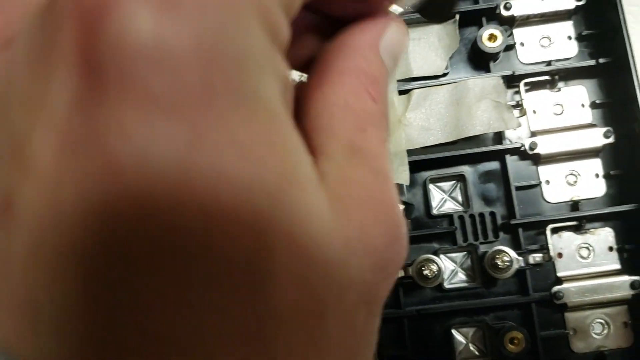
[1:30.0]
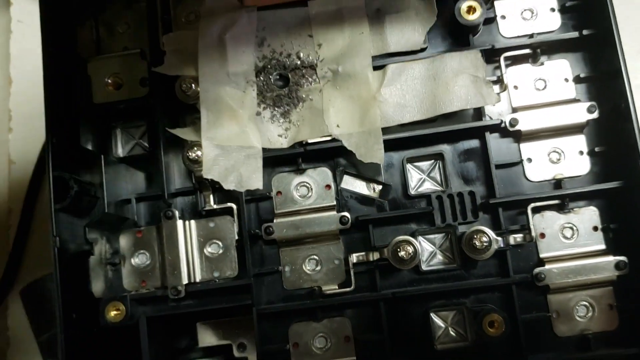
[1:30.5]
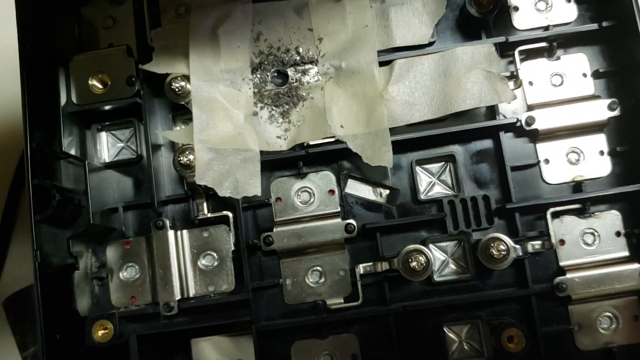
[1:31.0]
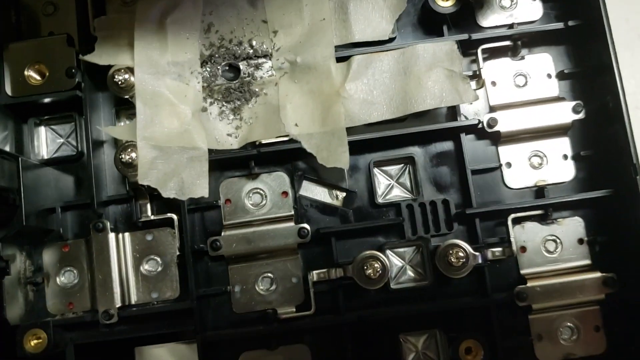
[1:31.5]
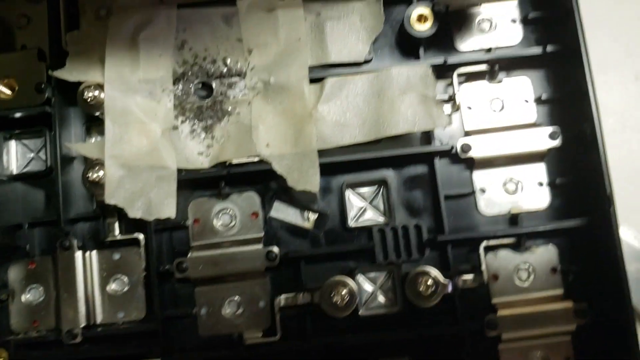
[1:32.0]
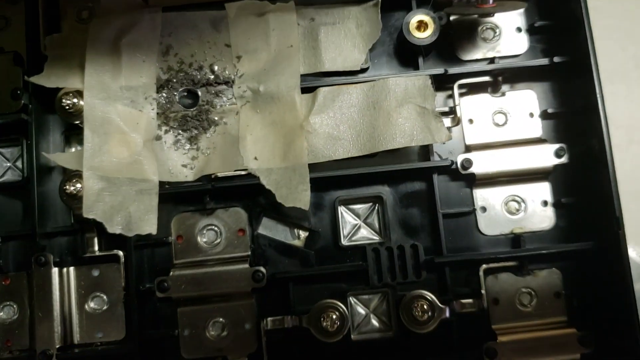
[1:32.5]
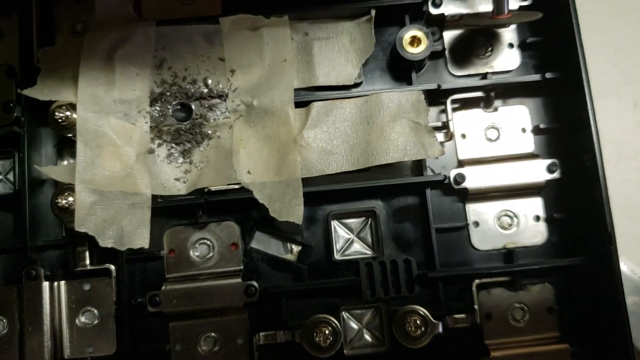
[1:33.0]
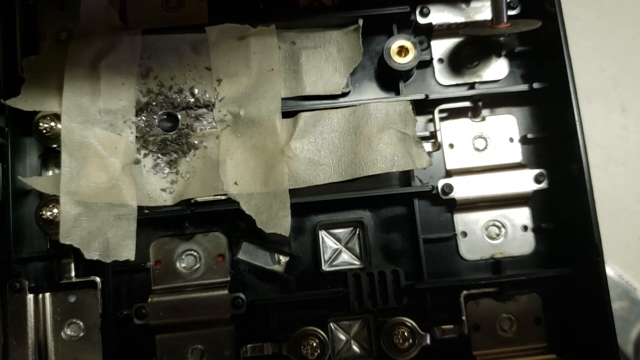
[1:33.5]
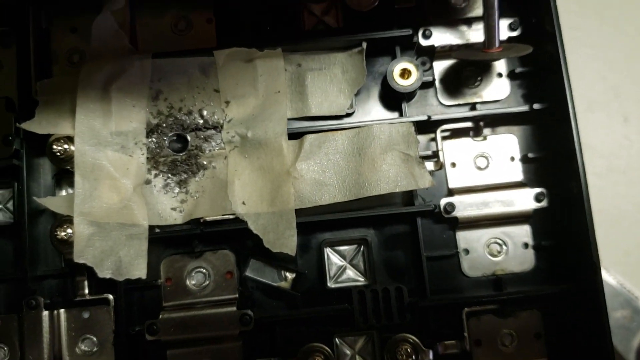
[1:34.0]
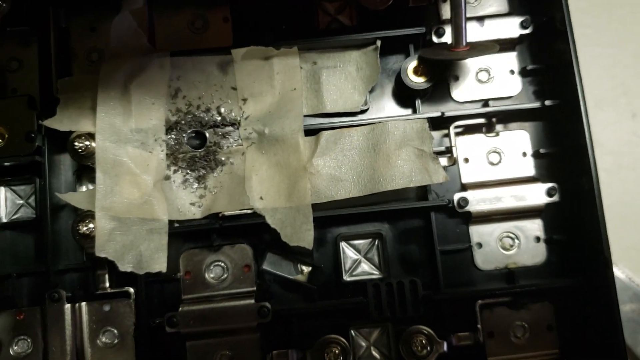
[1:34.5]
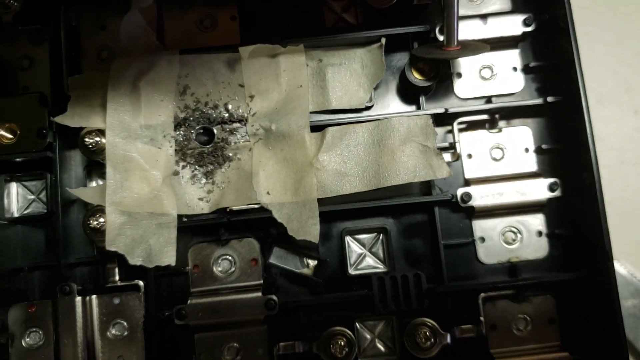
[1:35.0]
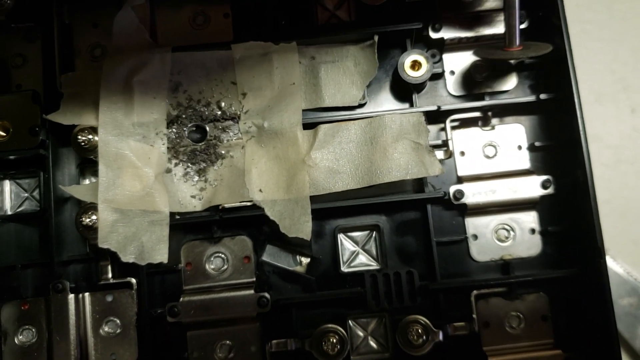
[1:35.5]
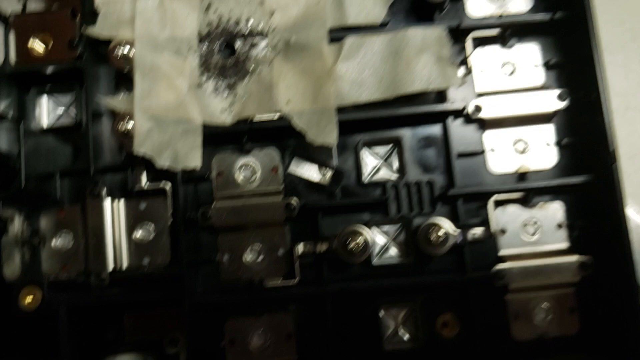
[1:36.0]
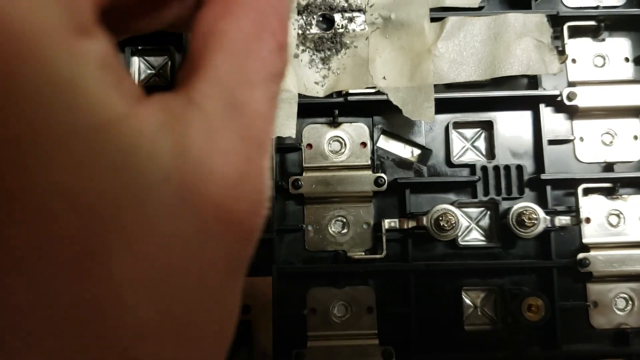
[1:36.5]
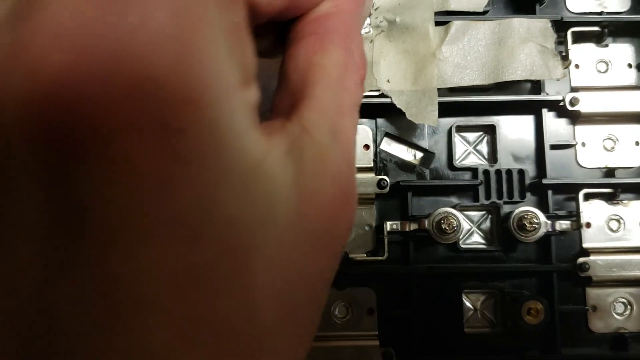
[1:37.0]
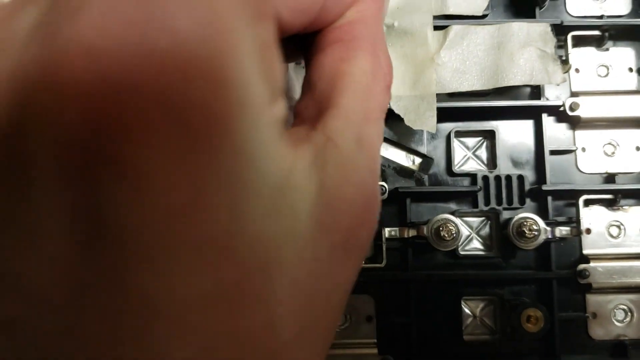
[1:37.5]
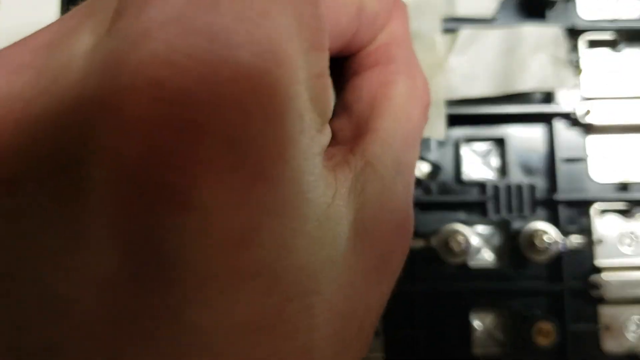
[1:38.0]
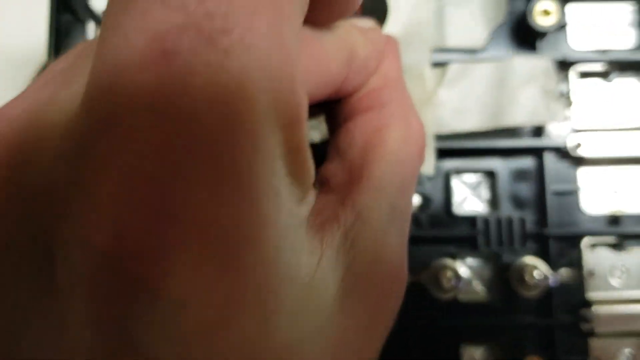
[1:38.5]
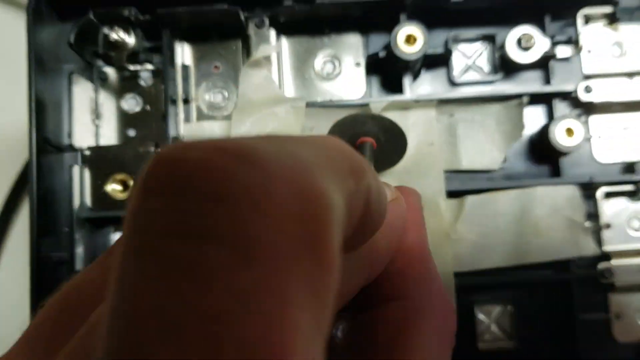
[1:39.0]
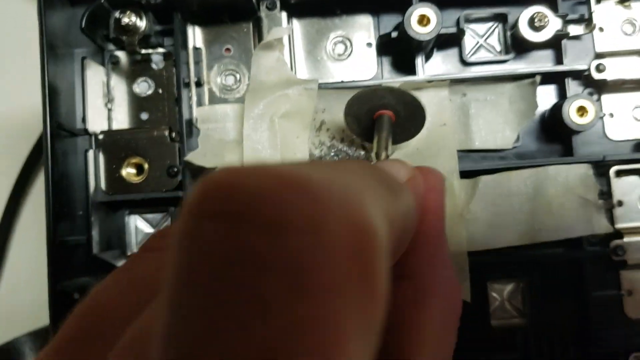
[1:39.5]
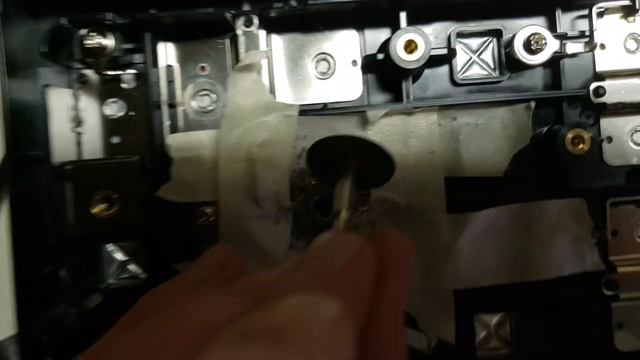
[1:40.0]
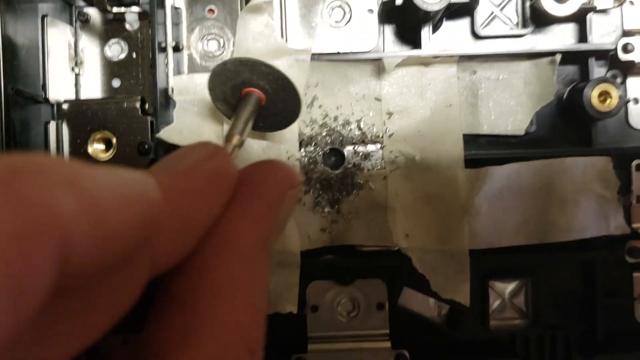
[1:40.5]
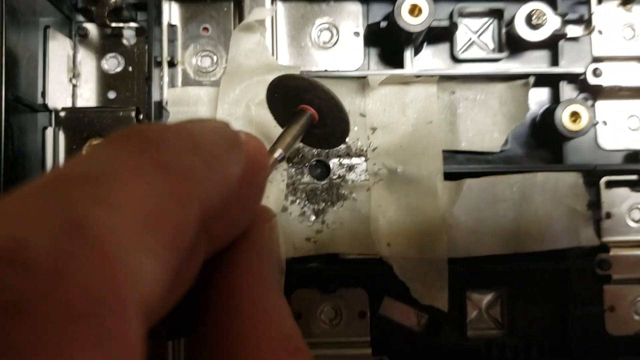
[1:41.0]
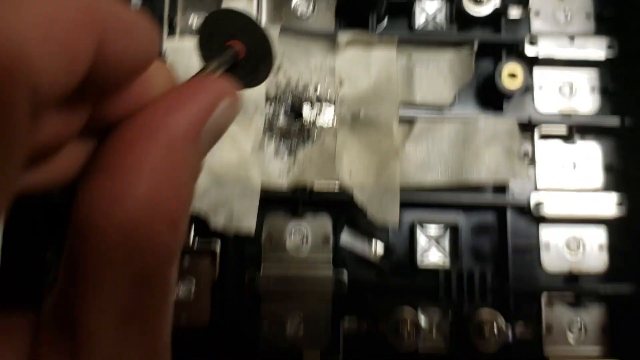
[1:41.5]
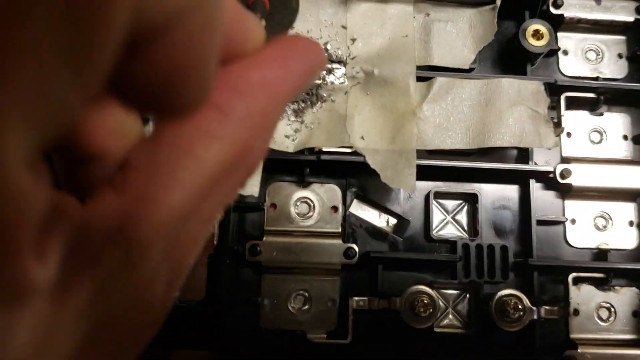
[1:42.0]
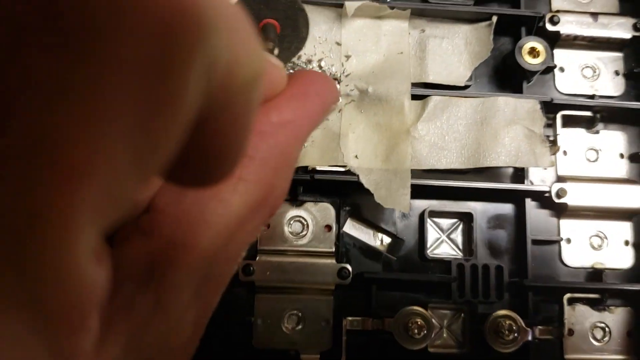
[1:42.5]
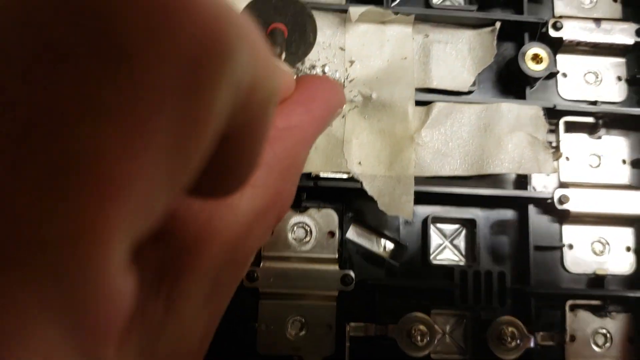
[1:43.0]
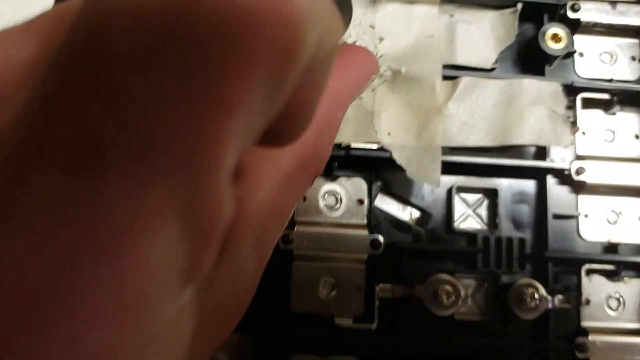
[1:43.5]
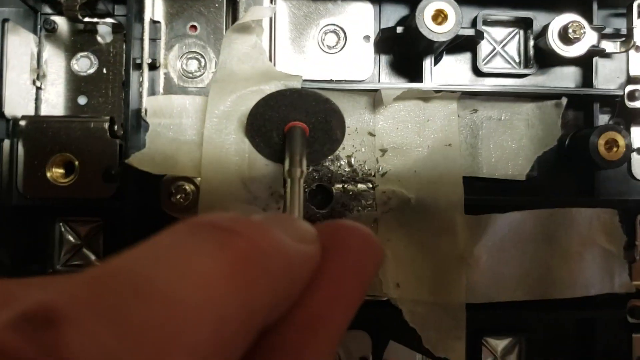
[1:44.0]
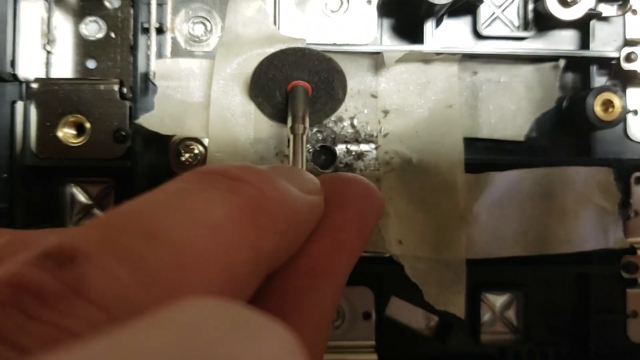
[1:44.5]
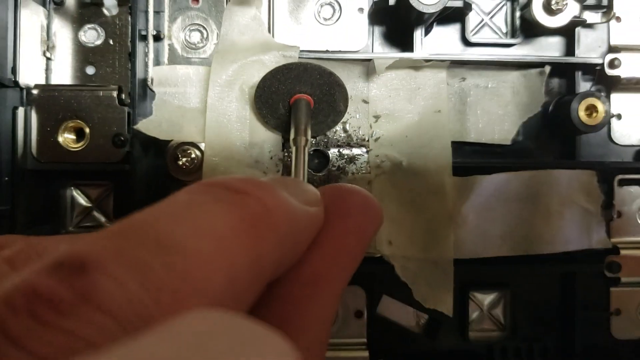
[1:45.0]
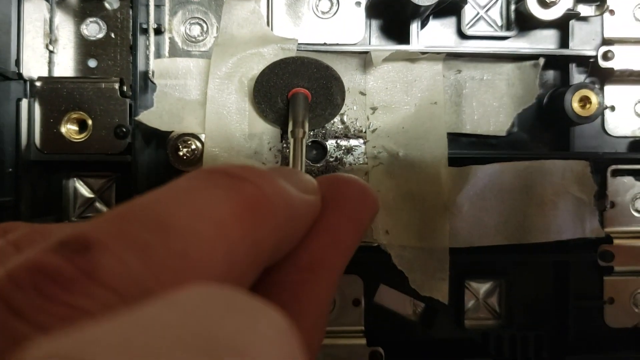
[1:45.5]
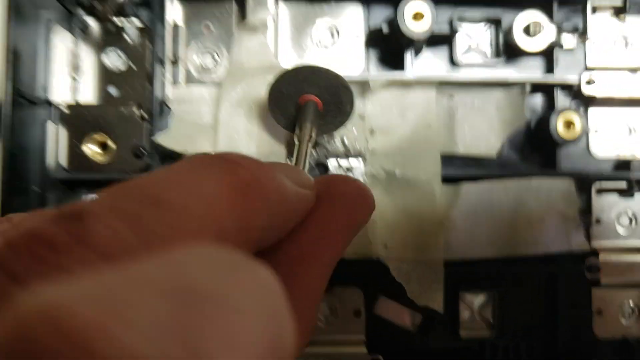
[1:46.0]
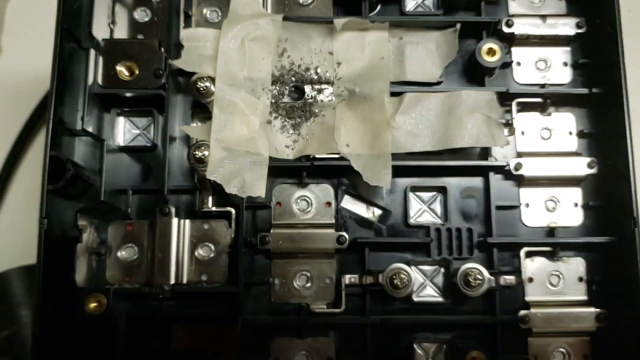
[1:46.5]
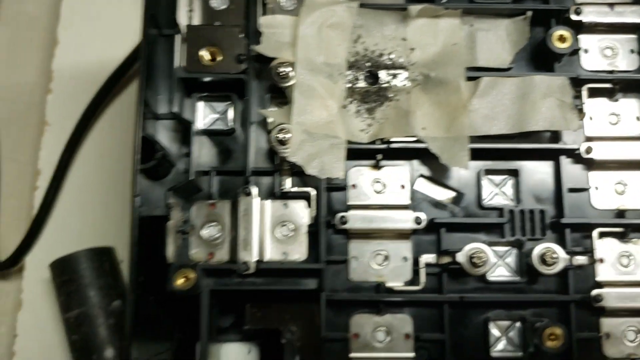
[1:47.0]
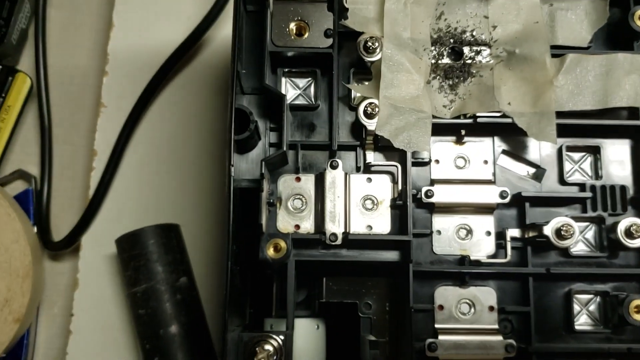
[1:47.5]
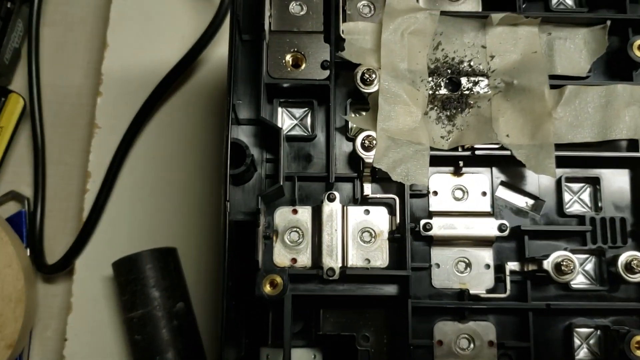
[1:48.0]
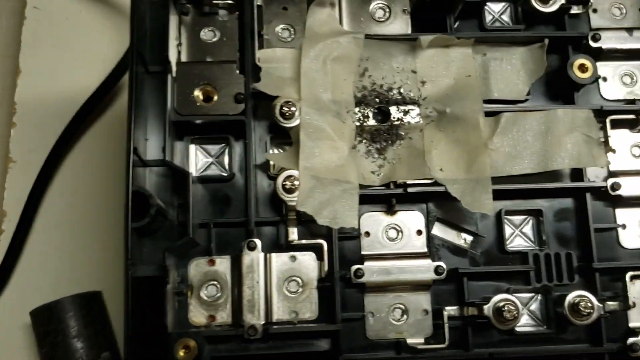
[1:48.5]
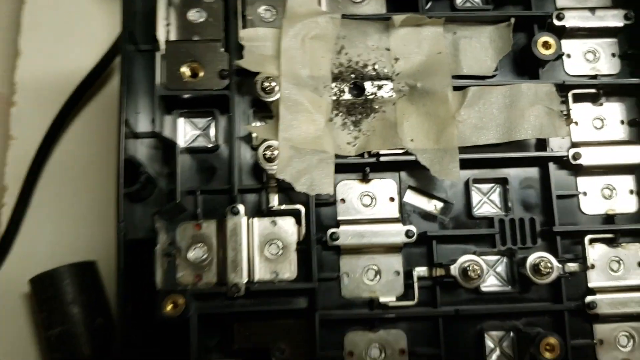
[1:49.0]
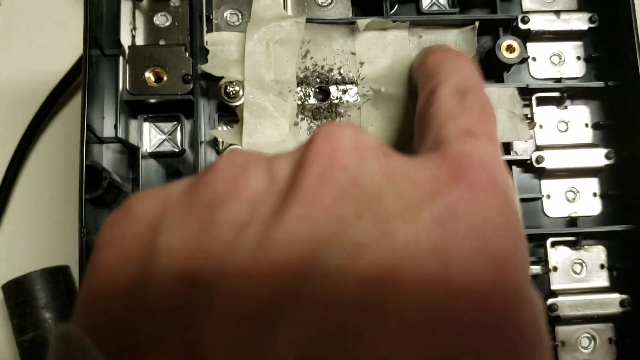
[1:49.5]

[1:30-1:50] The blade, detached from the multi-tool, is used to point at various parts of the item, apparently showing how they have been altered and perhaps the angle at which it was used to make the cuts in the item. He also presses down slightly on the tape that surrounds the cut.